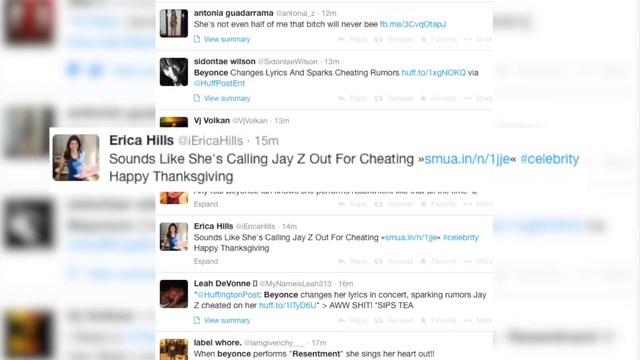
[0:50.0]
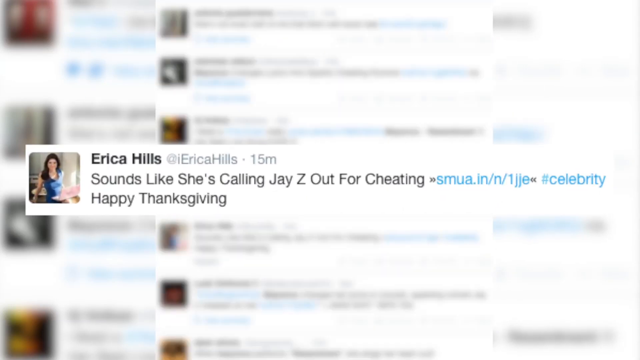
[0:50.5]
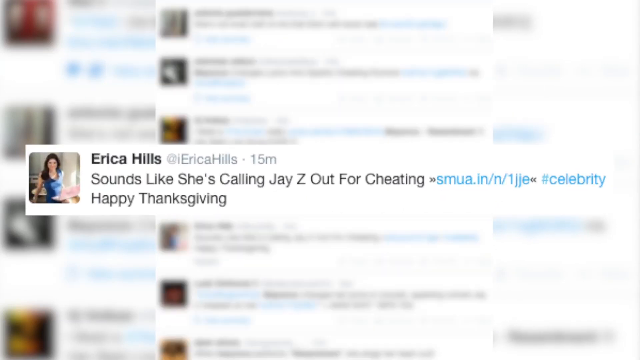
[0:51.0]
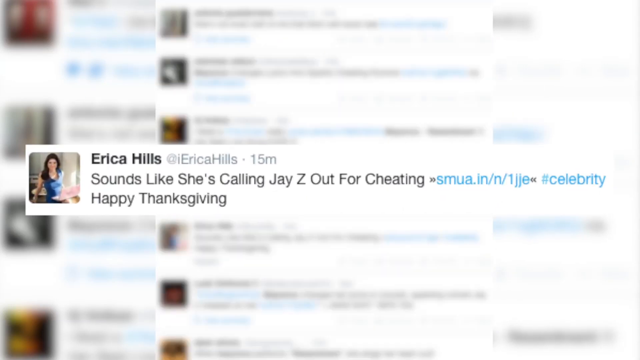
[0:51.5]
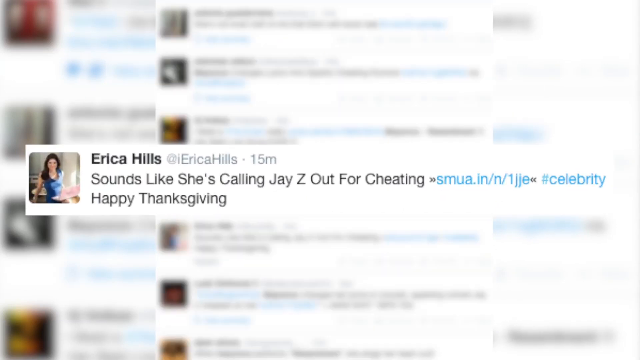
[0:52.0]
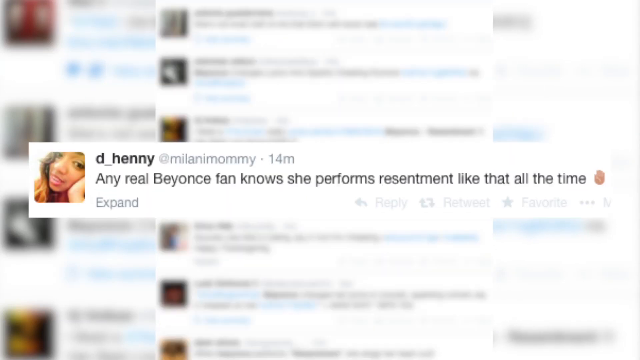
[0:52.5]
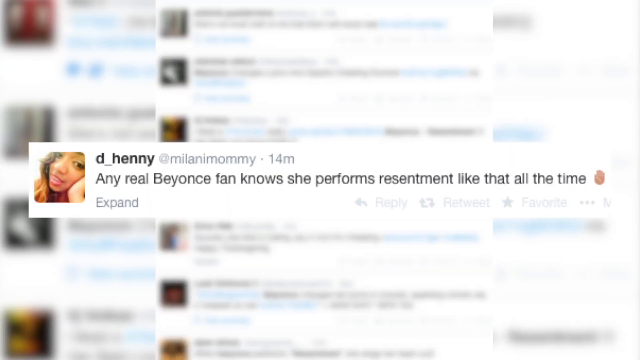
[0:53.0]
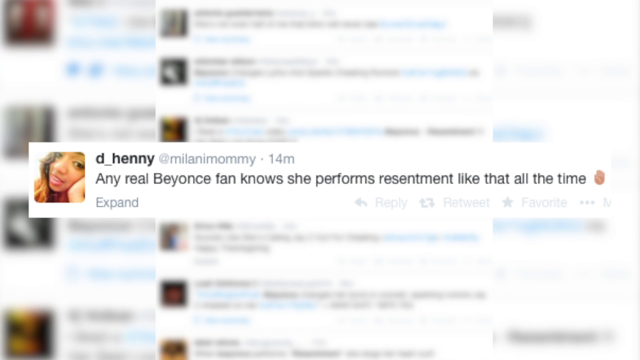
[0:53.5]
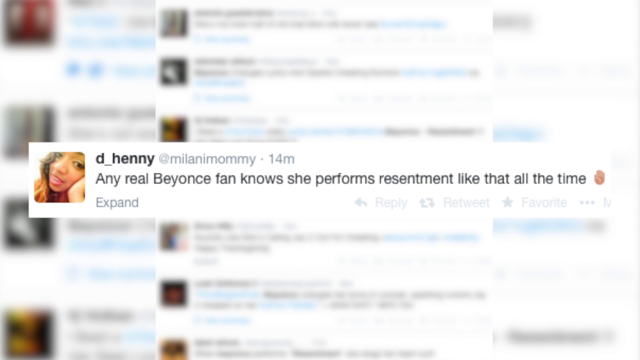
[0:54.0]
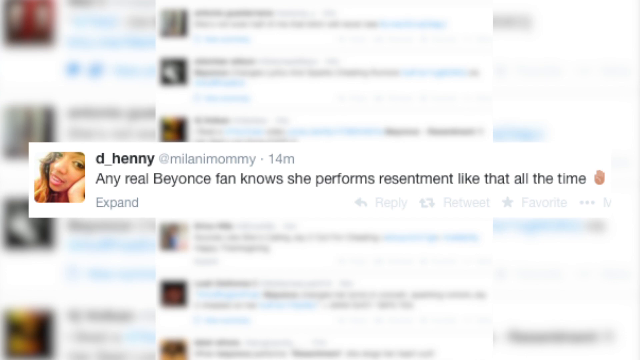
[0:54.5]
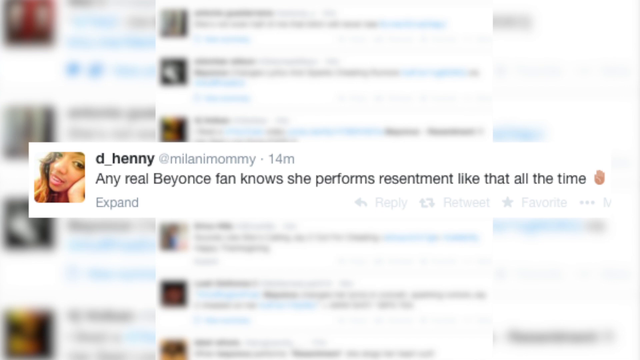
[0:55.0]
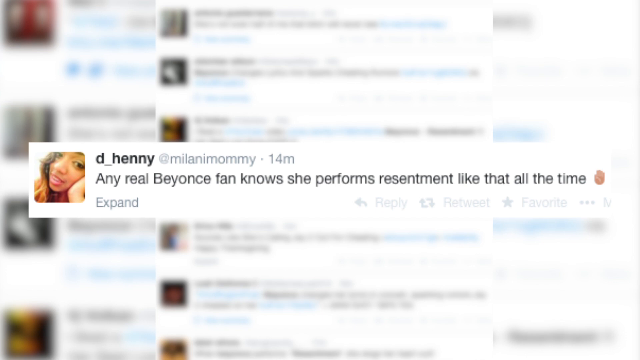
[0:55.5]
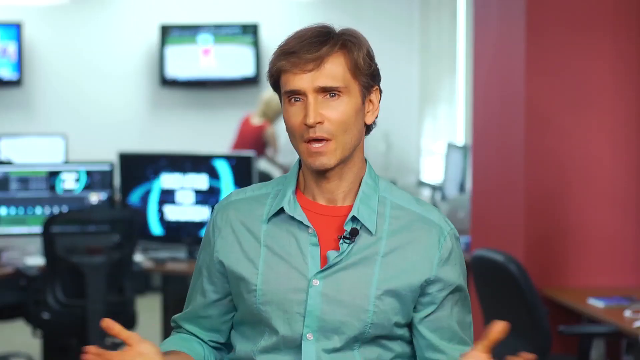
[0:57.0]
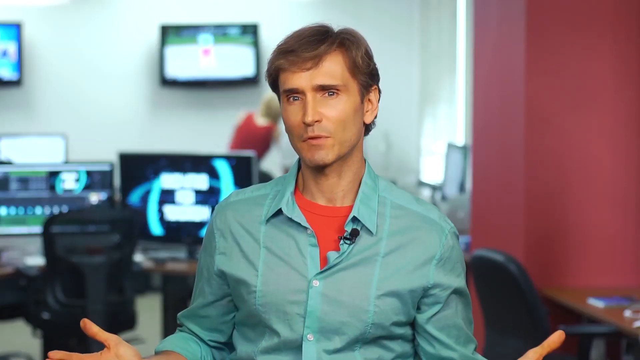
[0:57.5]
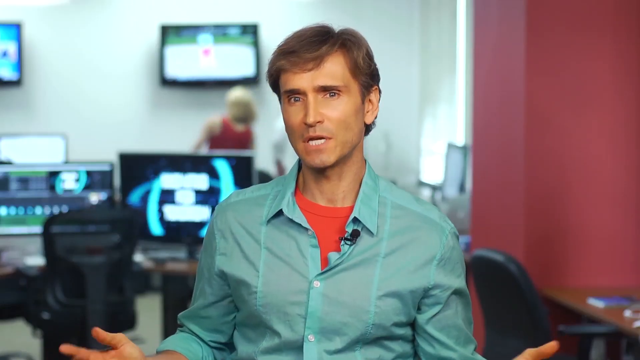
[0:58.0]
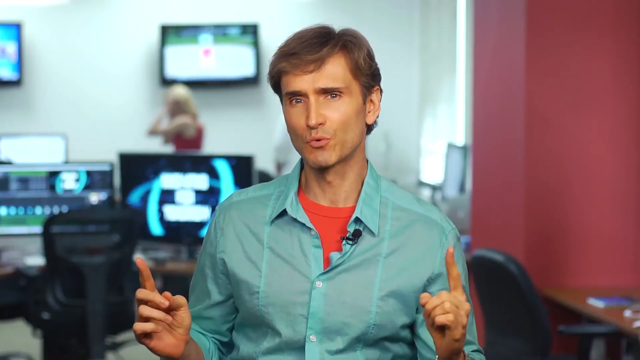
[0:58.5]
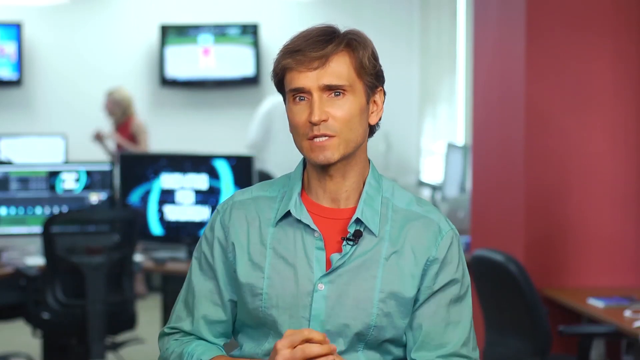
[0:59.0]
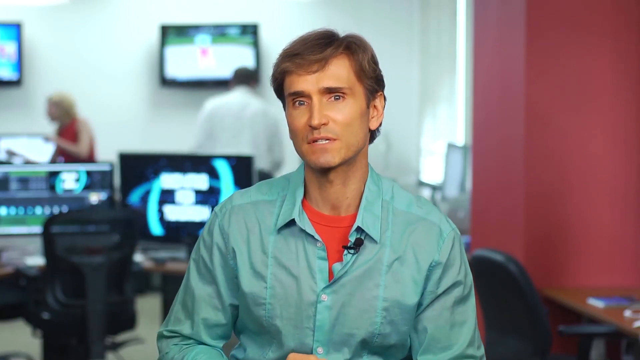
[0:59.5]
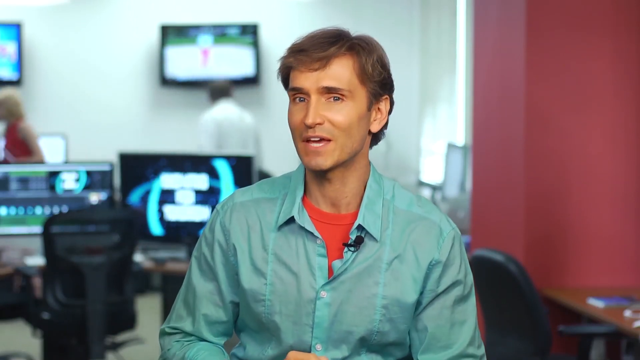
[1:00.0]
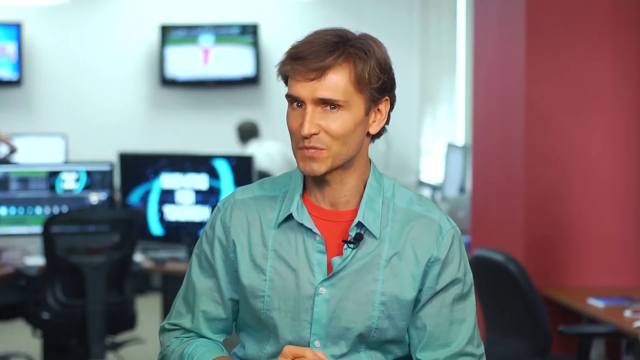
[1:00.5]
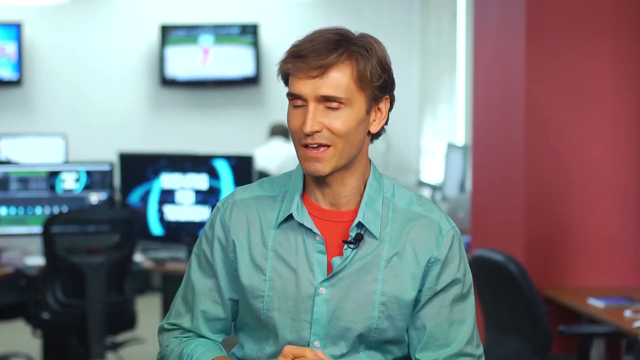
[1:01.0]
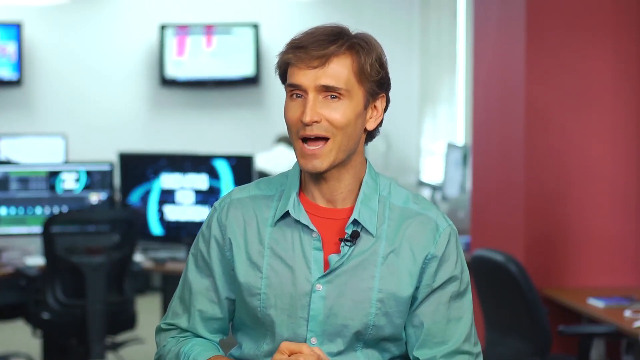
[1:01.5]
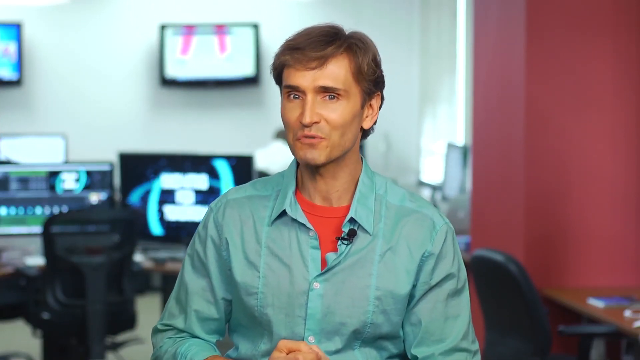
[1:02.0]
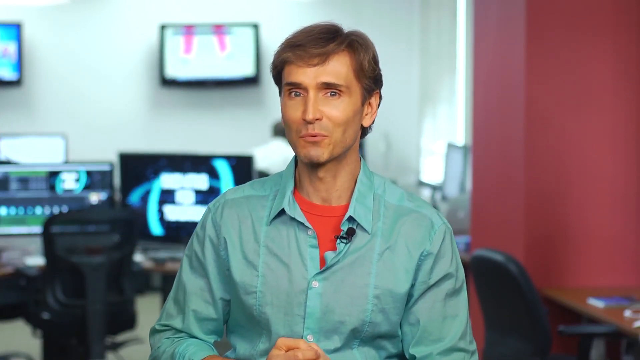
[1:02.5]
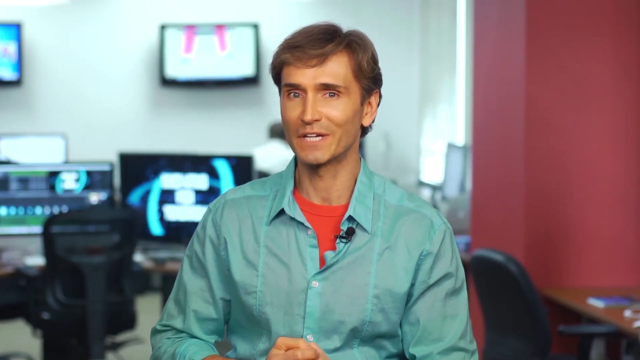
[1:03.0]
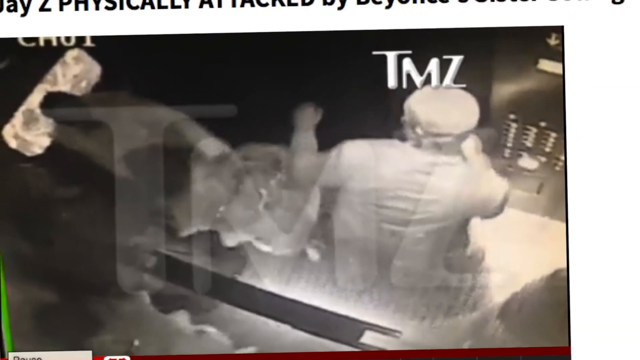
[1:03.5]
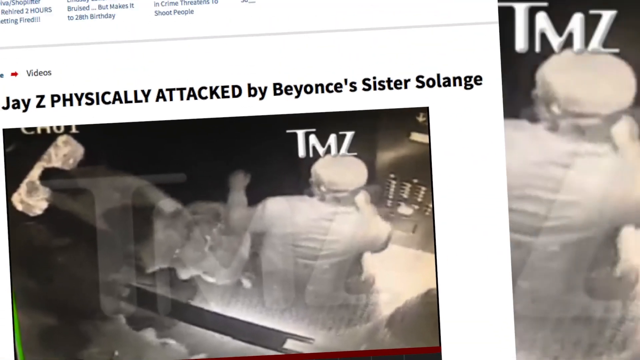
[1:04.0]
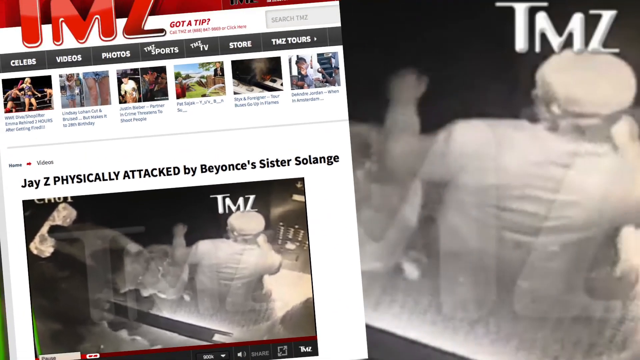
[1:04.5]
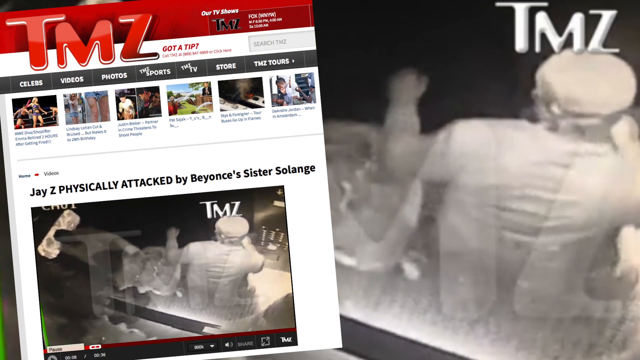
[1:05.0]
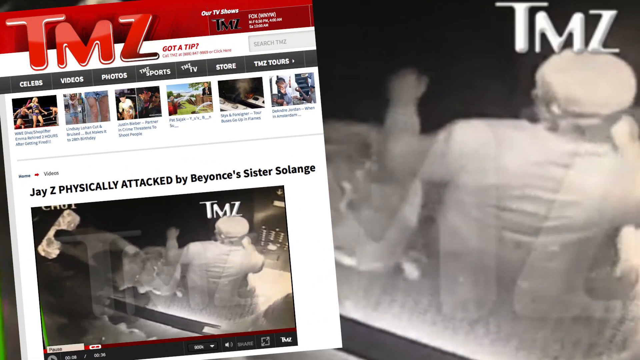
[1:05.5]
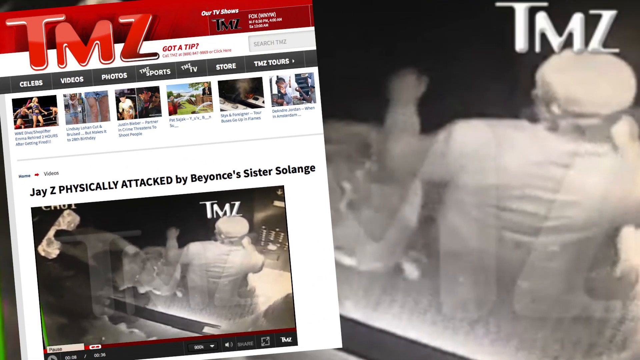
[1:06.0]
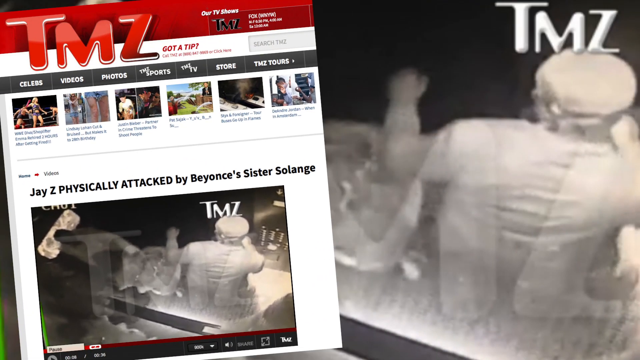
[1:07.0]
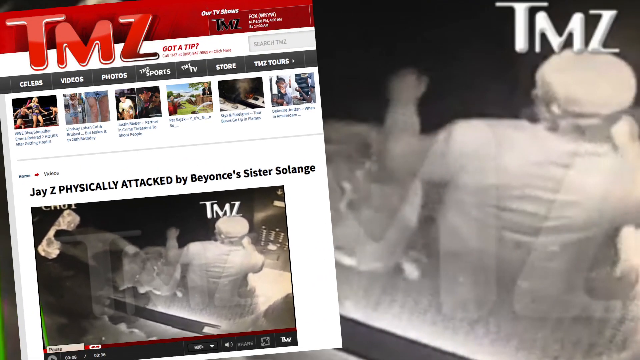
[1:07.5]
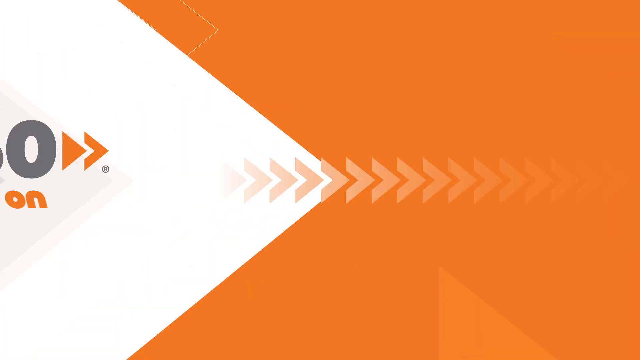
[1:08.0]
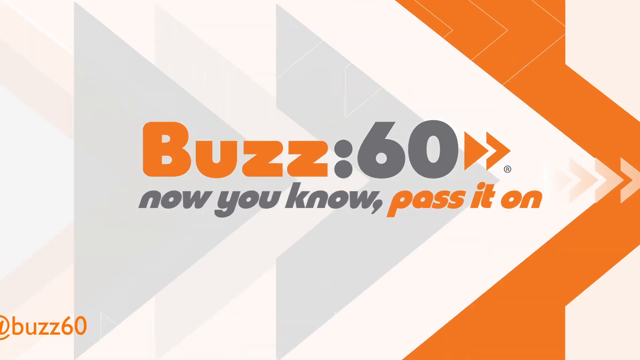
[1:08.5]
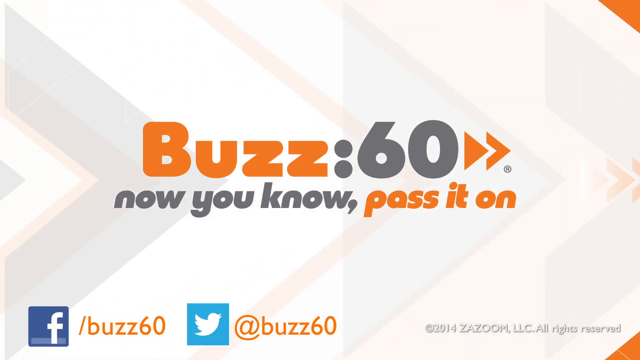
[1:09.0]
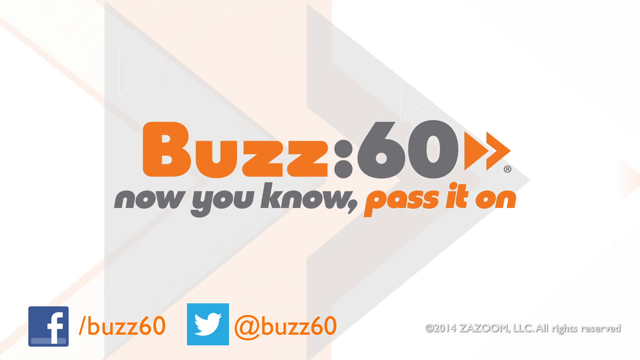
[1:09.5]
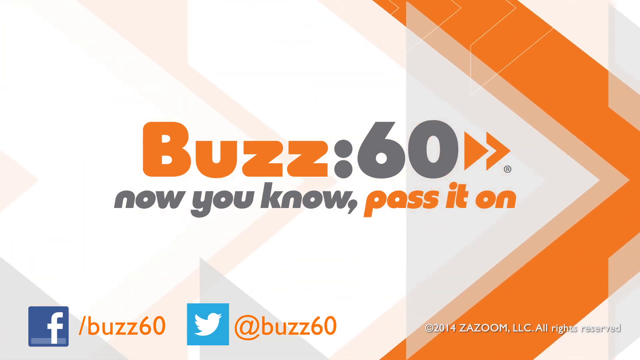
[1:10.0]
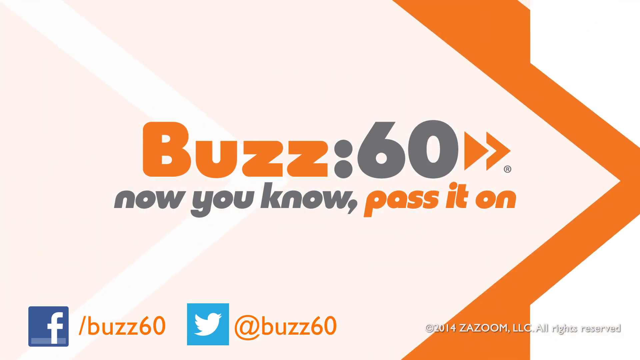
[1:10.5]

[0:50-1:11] A tweet from Erica Hills contains what appears to be a link in blue, "smua.in/n/1jje", followed by a hashtag "#celebrity", also in blue. Next is a tweet by user d_henny, with d_henny in black text and "@milanianmommy" in grey text. The tweet reads "Any real Beyonce fan knows she performs resentment like that all the time" with a hand waving emoji. The video cuts back to the reporter presenting the tweets; he talks to the camera, points with both fingers for emphasis, and nods at the screen. It then cuts to a TMZ news article with a headline saying Jay Z was physically attacked by Beyonce's sister Solange, with what appears to be a photo taken at night under white lighting of Jay-Z being attacked. The screenshot of the TMZ article transitions to the lower left-hand side of the screen, slightly rotated to the left, and the video cuts to an outro for Buzz 60 with arrows pointing to the right-hand side as it transitions.